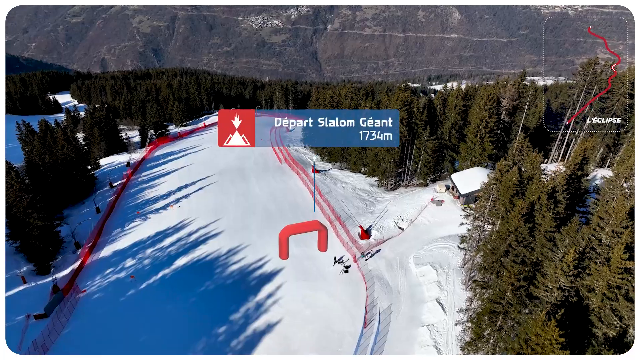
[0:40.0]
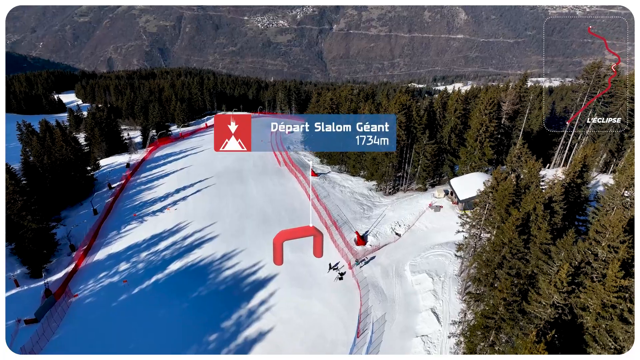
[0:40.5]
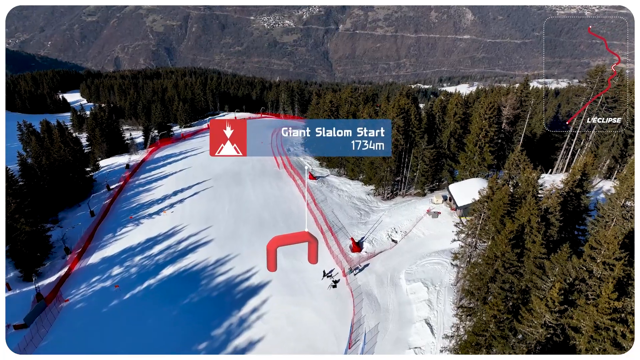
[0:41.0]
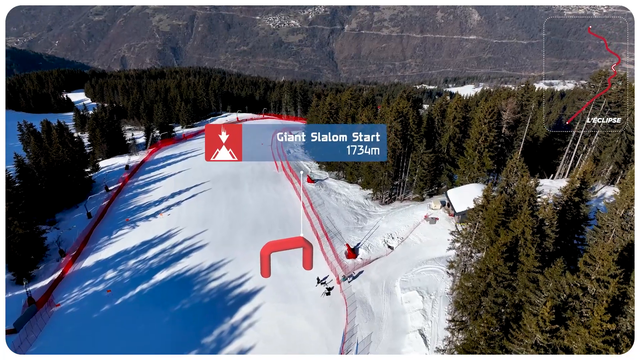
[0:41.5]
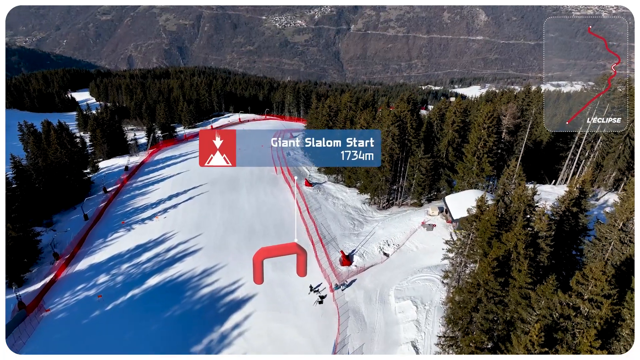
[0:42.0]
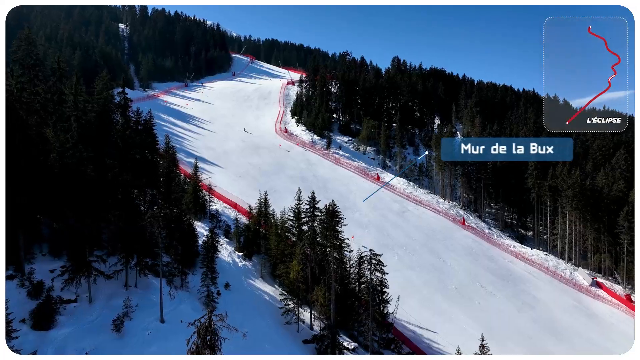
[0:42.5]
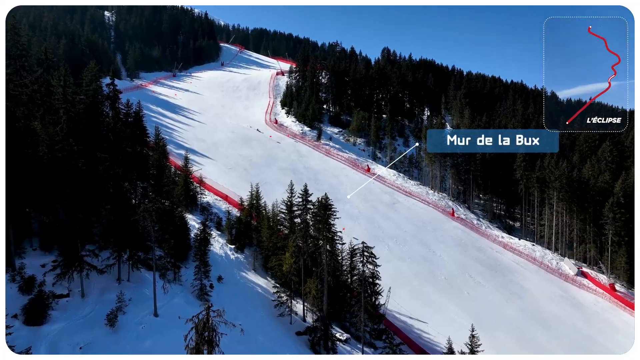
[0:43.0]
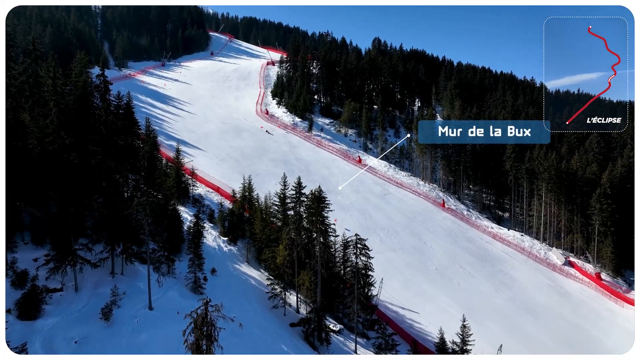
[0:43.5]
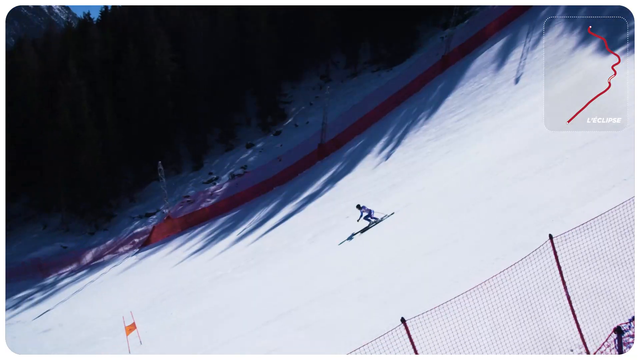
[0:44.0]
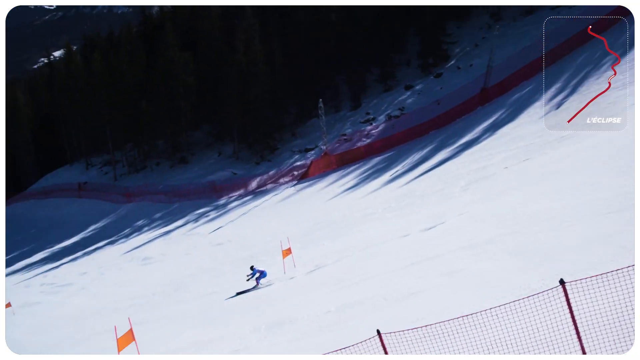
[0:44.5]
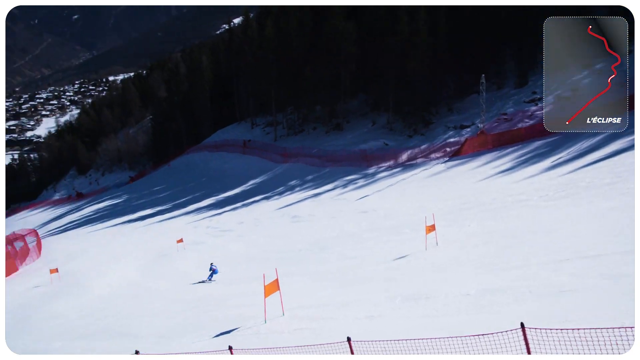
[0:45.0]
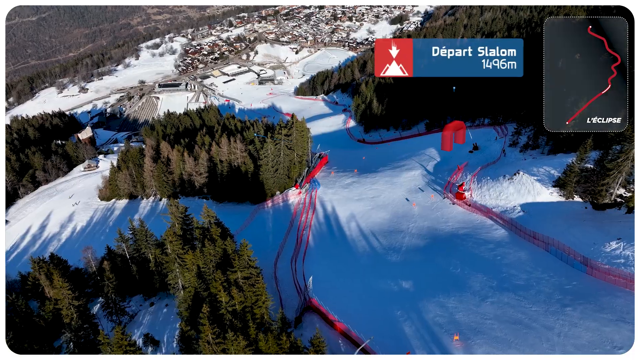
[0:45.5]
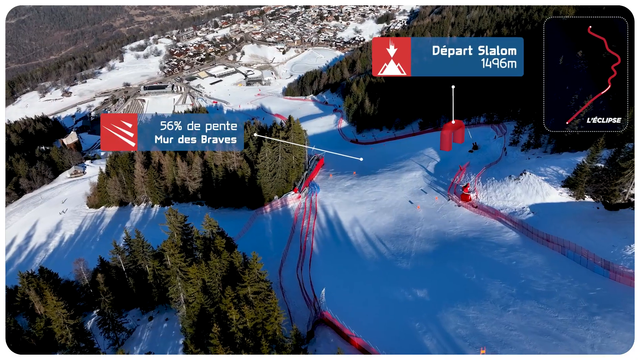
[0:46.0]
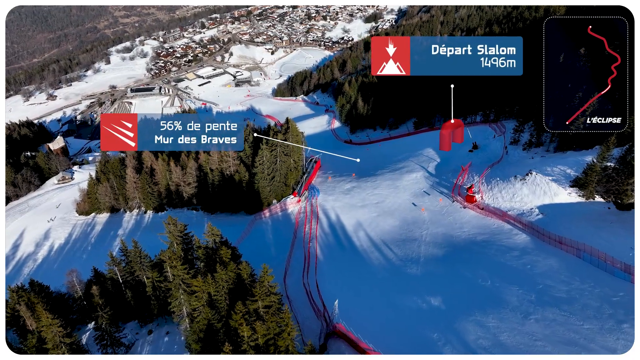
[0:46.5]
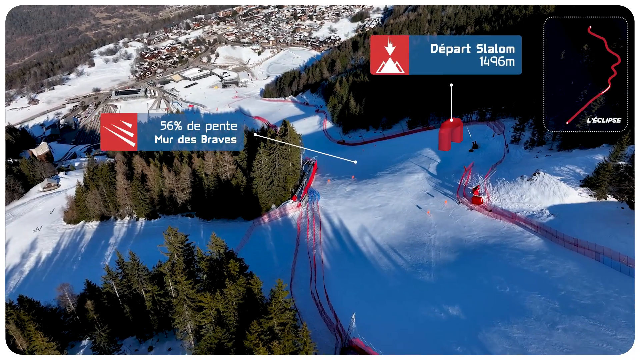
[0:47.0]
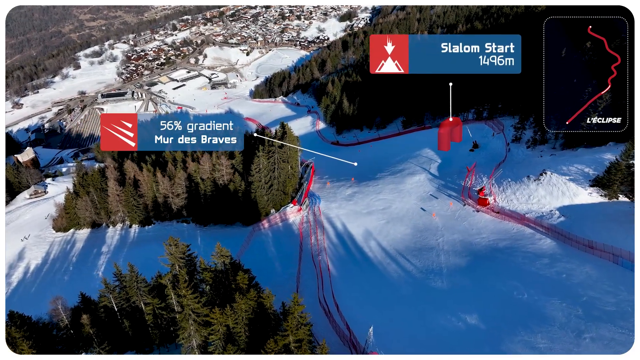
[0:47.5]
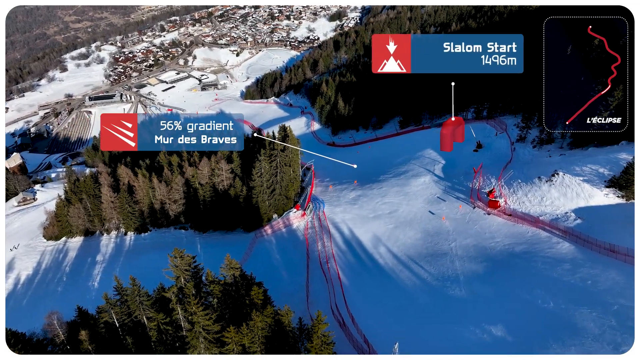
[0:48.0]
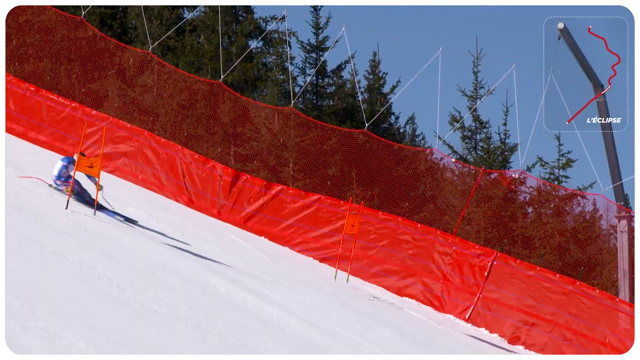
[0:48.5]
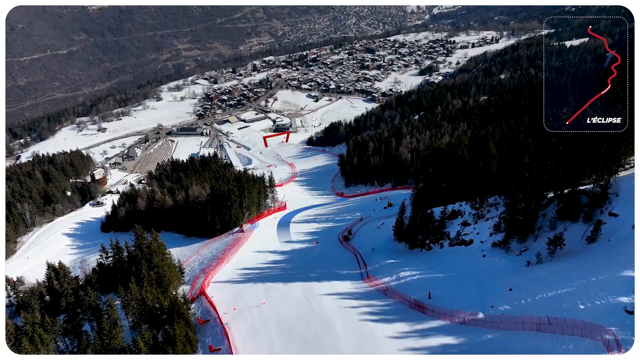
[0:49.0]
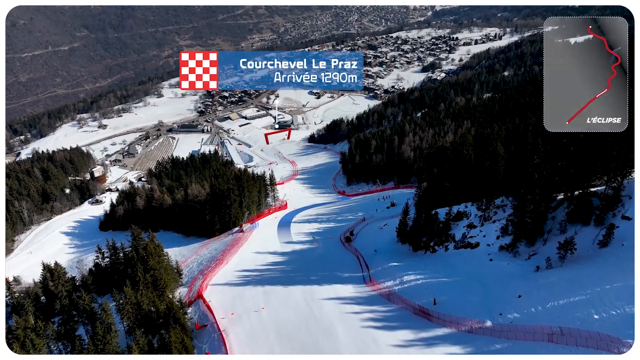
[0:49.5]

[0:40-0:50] A very steep part of the slope is shown, looking as if it goes almost directly down. A few shots show skiers going down very fast, and some of them pass through different flags, which seem to be mandatory for completing the course correctly. More areas of the course that they have to complete are shown, and possibly different elevations as well, perhaps for different events. Lots of very tall, very green trees line the course.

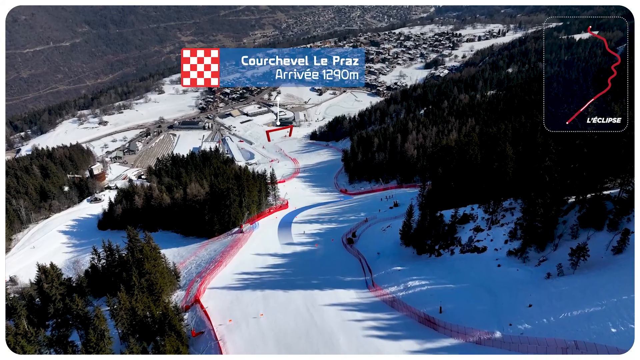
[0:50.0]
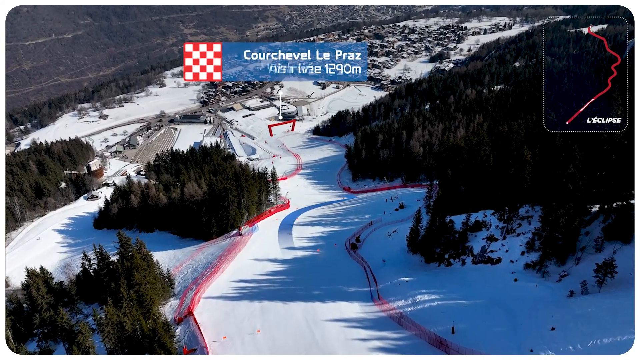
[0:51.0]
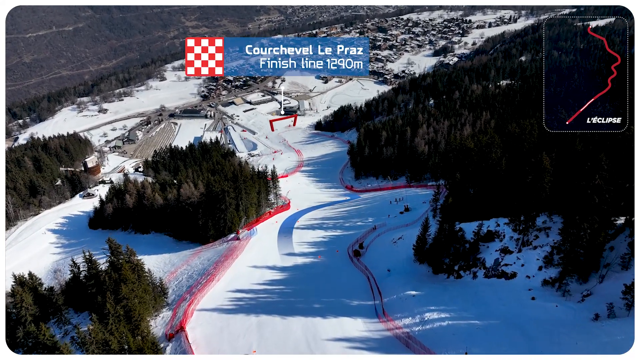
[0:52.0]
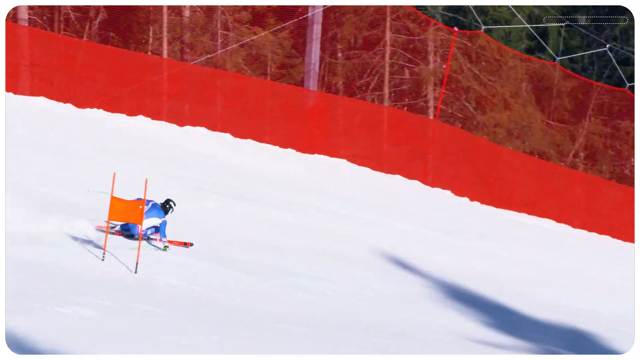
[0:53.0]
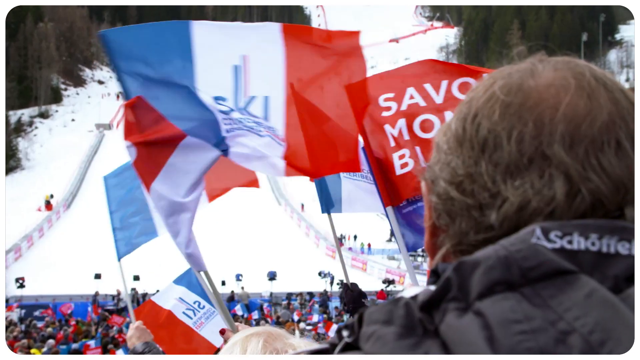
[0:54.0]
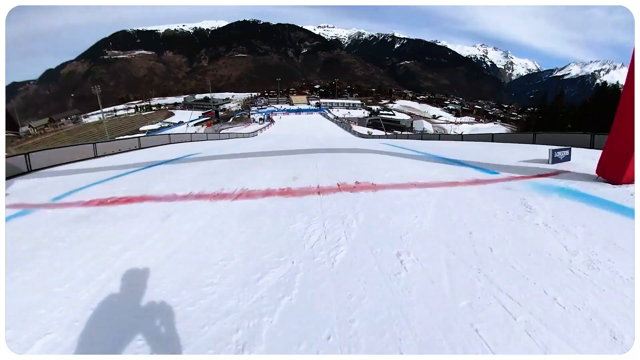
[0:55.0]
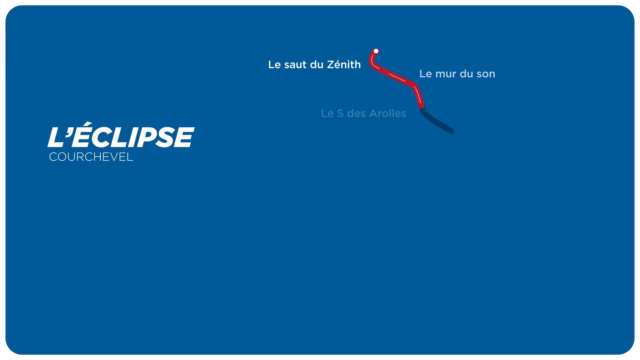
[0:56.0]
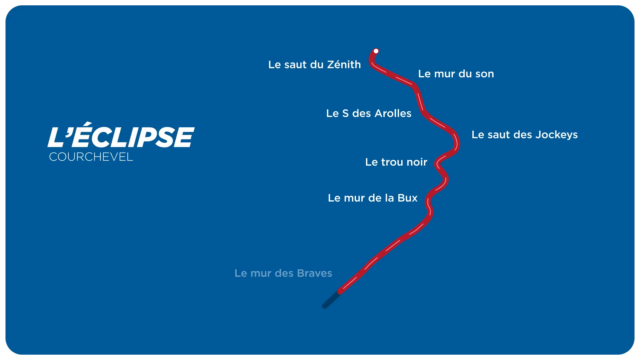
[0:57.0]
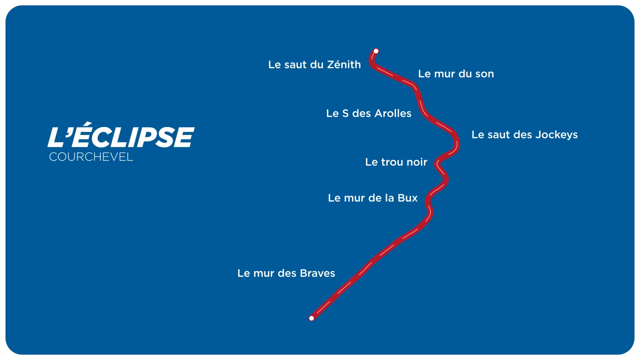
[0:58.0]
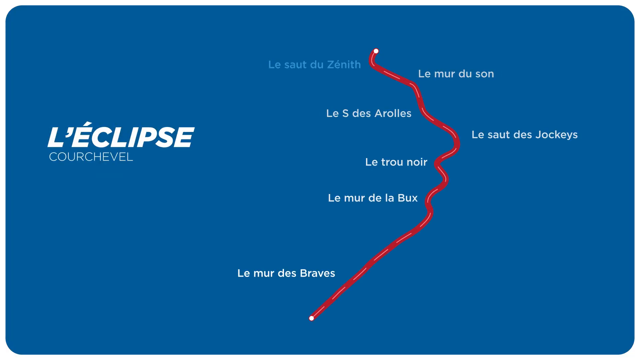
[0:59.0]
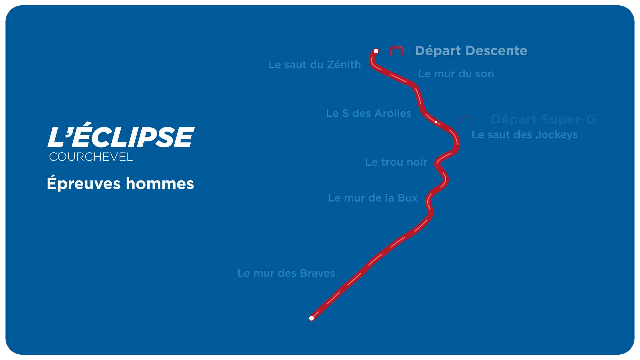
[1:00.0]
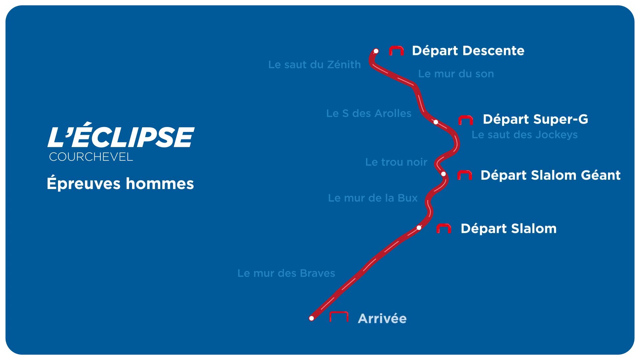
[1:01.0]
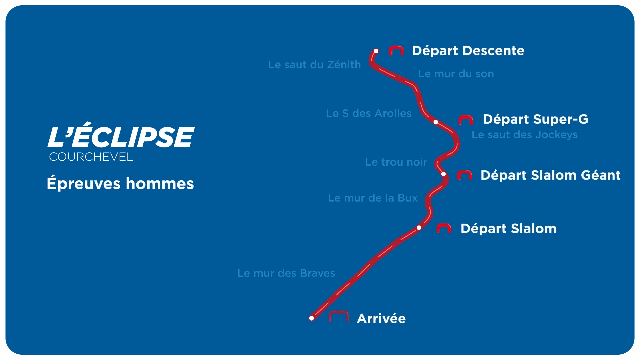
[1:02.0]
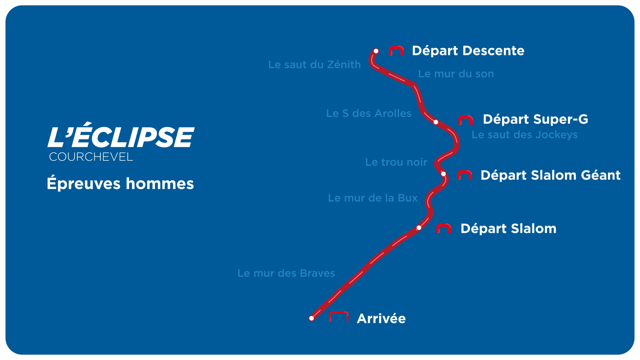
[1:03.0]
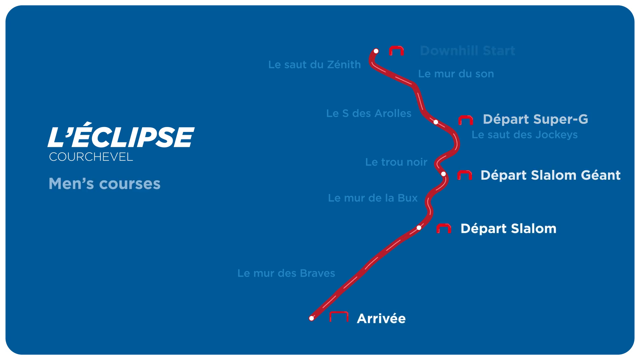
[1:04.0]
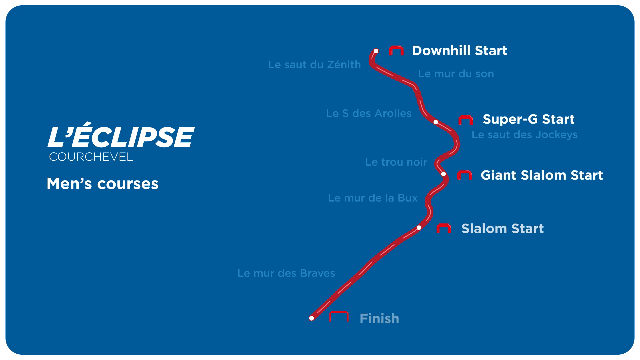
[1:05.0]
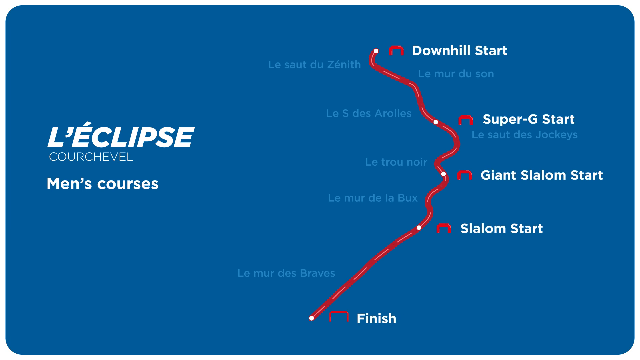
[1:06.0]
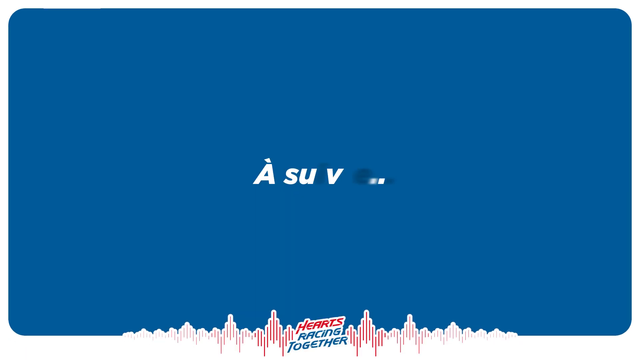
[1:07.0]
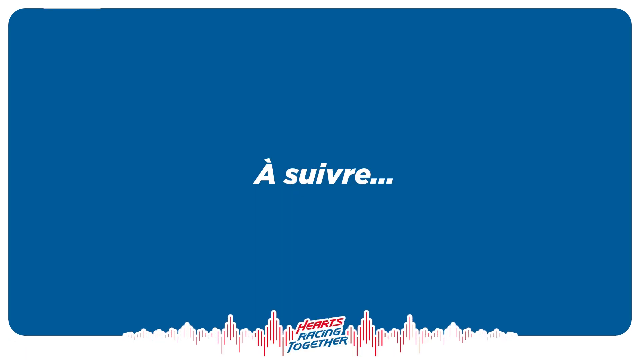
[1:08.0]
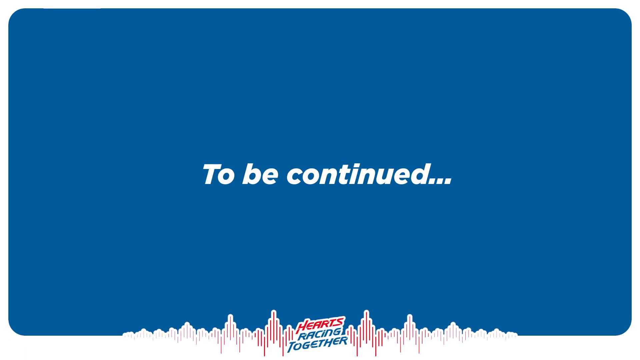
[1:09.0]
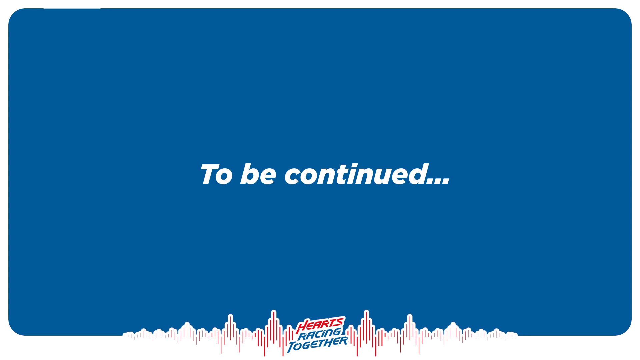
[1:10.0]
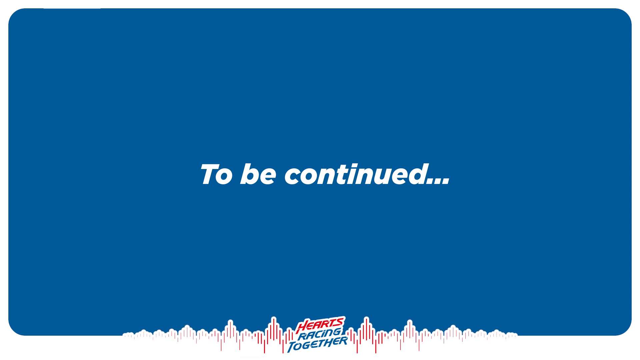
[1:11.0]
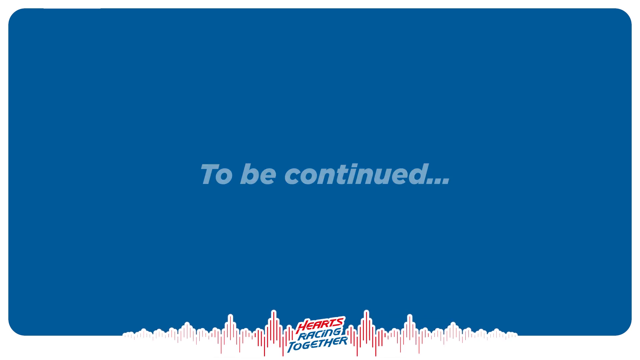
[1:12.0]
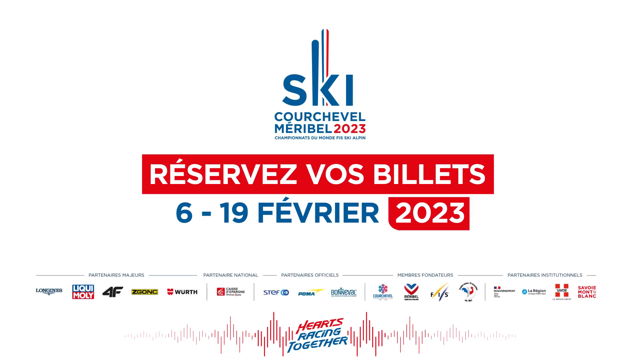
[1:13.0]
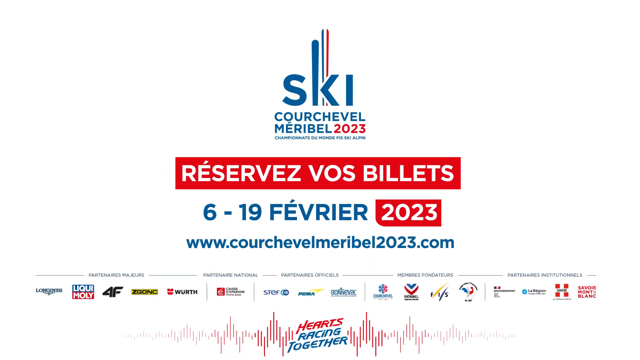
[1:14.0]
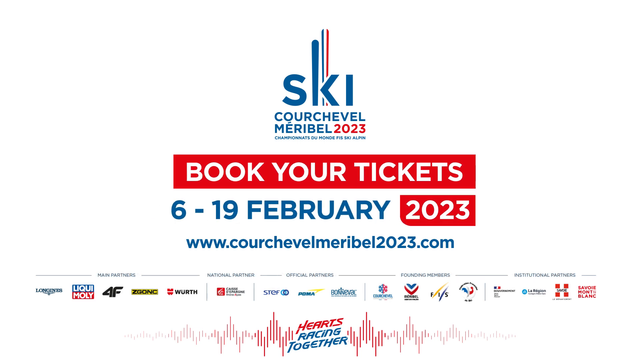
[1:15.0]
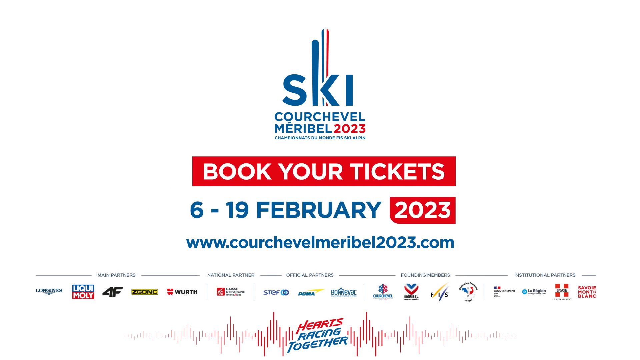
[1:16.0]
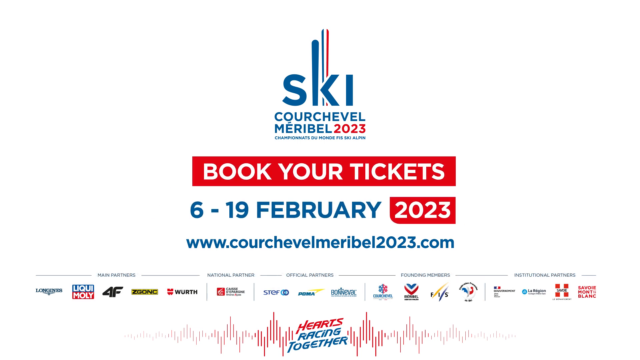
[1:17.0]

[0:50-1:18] The last stretch of the course is shown, and at the very end the skiers cross the finish line. The total course distance in meters and the elevation descended are then shown. Footage, possibly from a previous year, shows many people waving flags and celebrating as the skiers come down. Informational images then appear indicating more to come, and the event is shown to be in February.